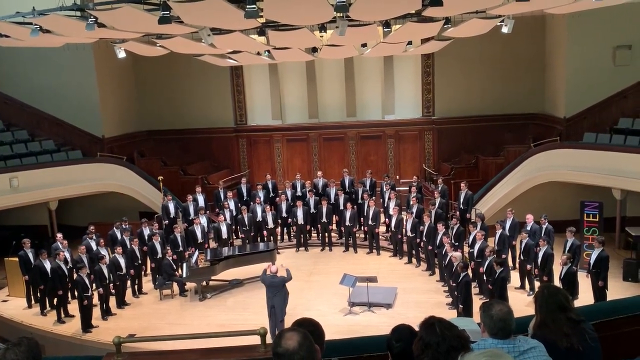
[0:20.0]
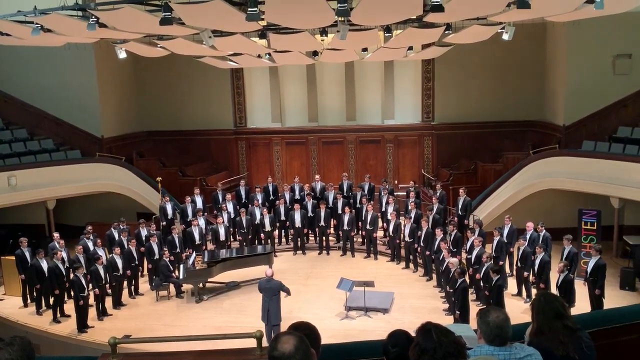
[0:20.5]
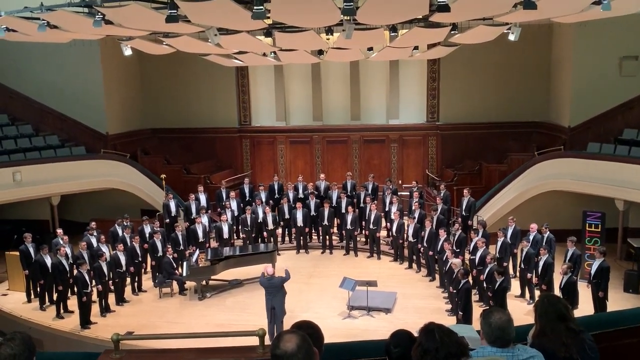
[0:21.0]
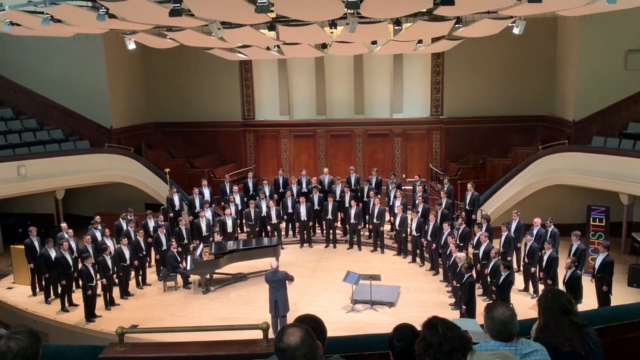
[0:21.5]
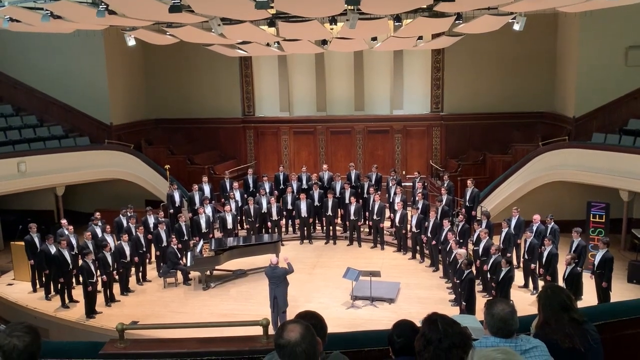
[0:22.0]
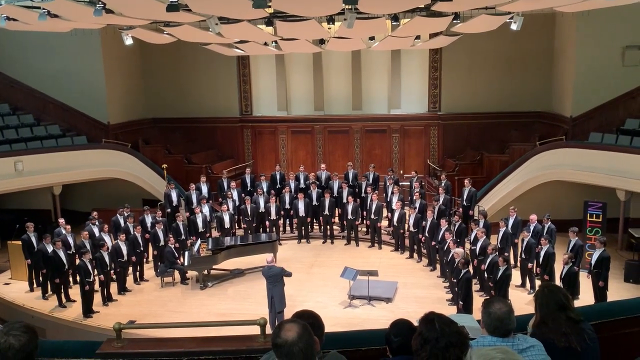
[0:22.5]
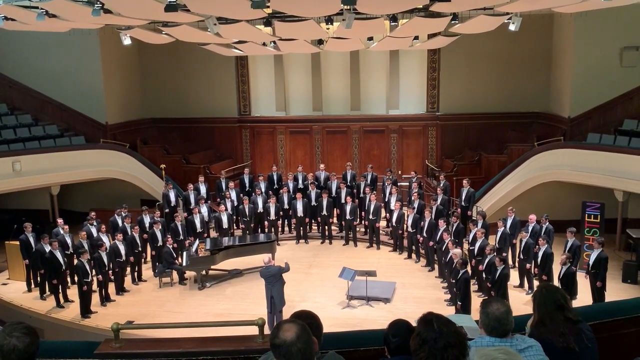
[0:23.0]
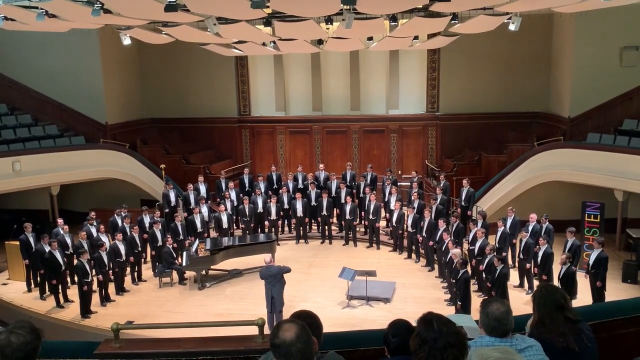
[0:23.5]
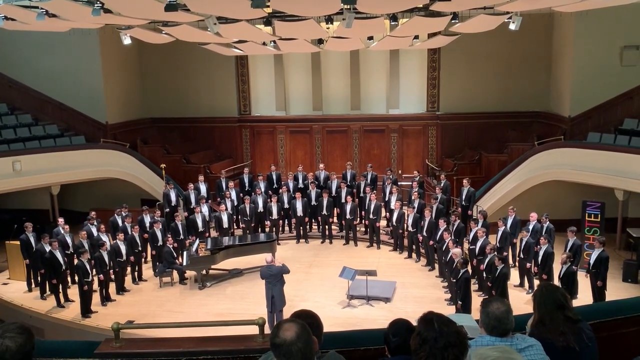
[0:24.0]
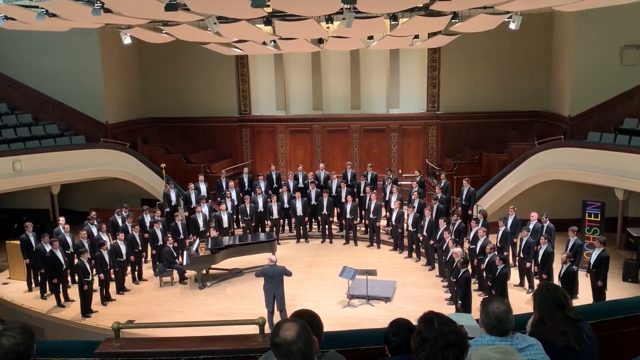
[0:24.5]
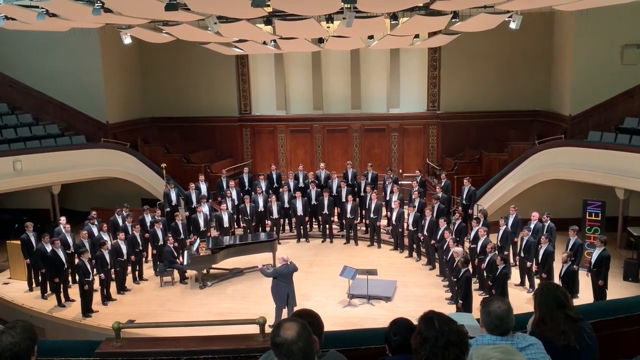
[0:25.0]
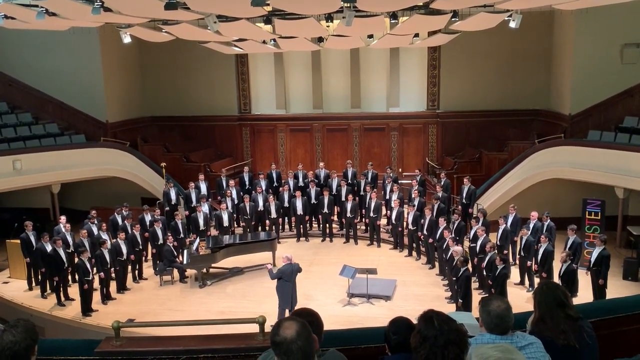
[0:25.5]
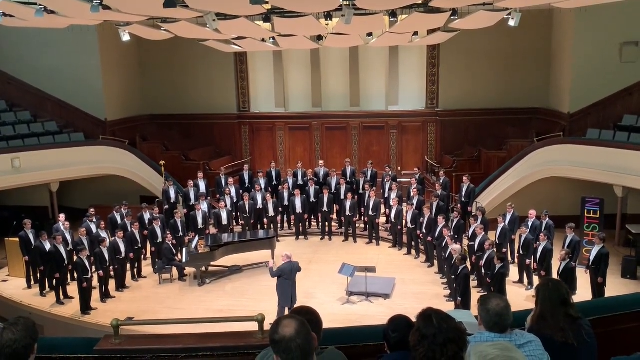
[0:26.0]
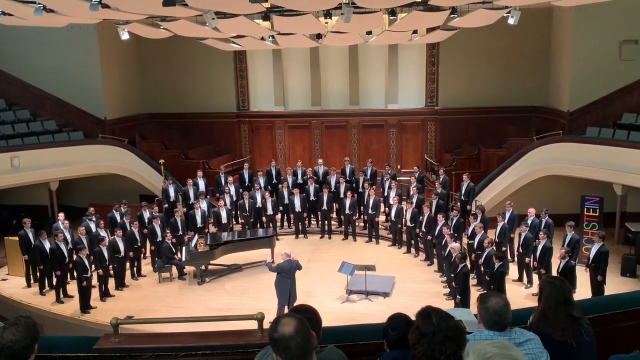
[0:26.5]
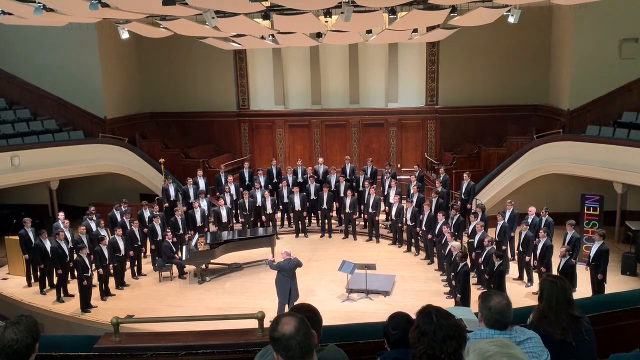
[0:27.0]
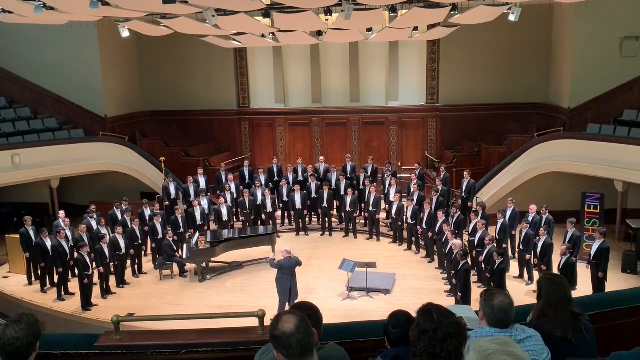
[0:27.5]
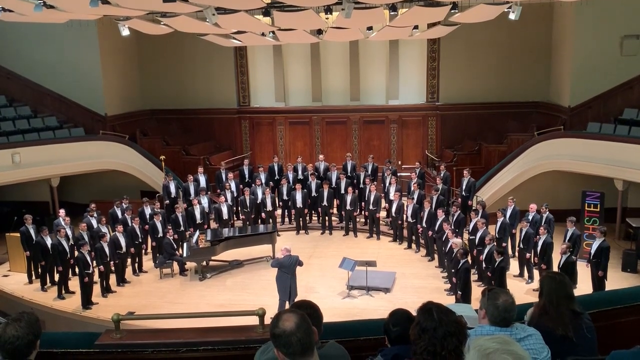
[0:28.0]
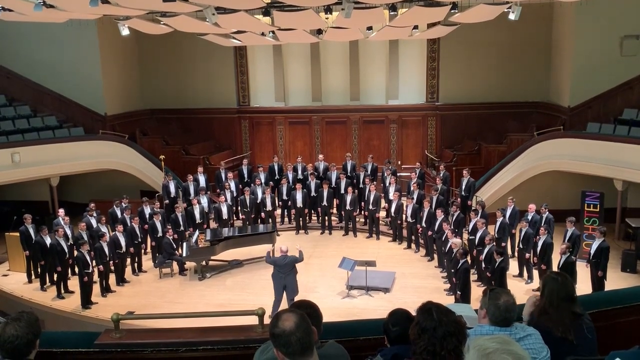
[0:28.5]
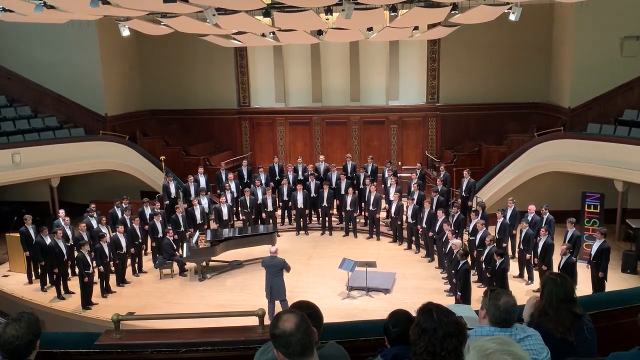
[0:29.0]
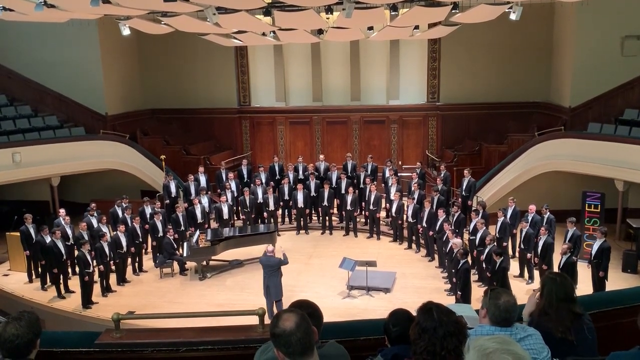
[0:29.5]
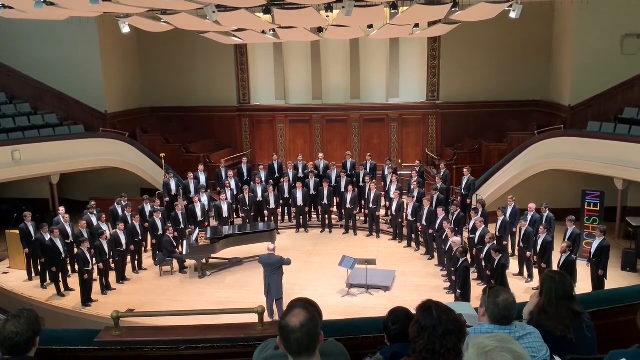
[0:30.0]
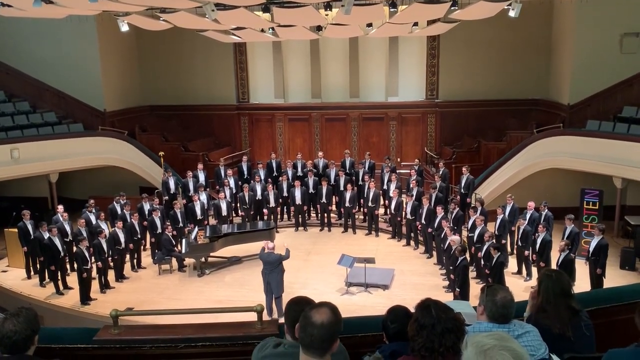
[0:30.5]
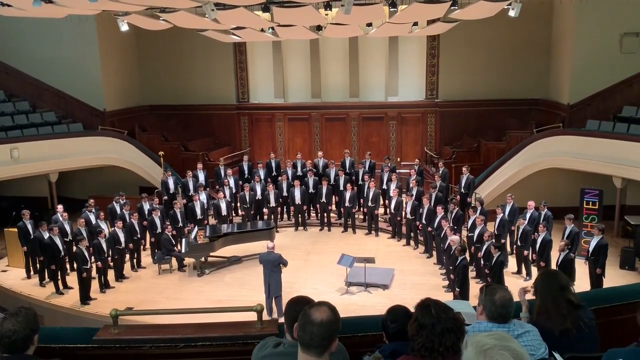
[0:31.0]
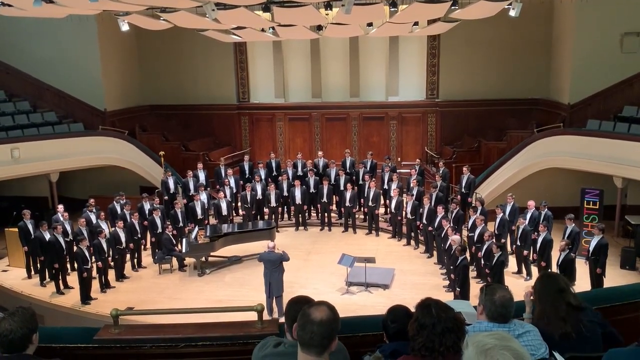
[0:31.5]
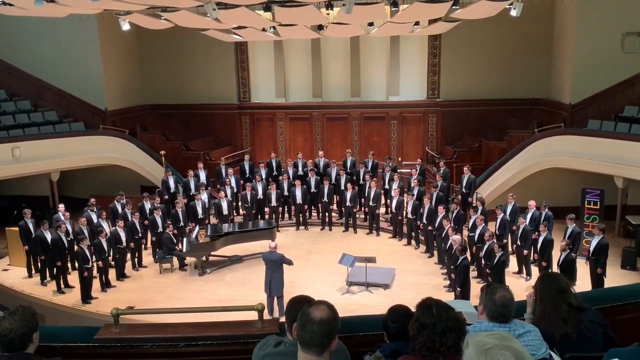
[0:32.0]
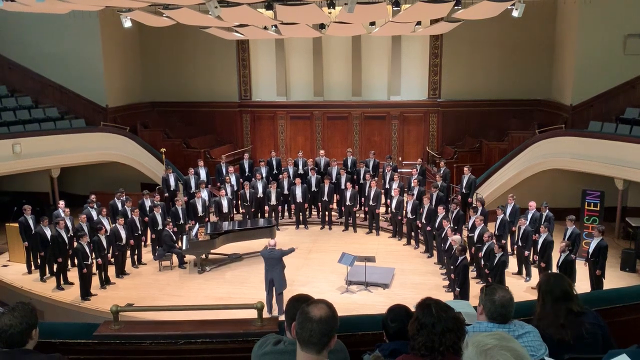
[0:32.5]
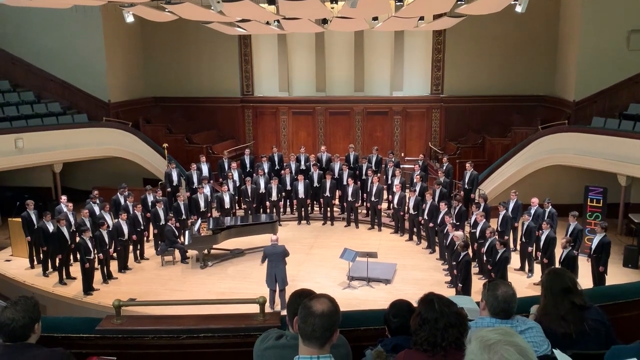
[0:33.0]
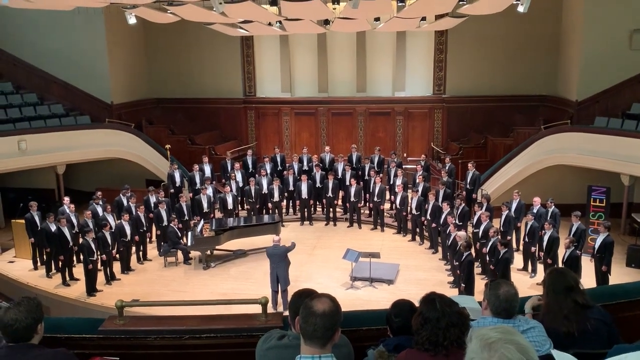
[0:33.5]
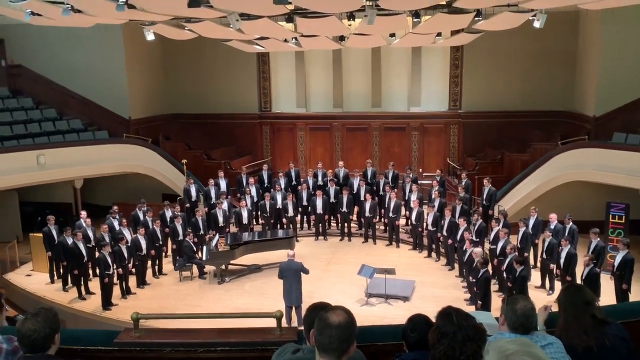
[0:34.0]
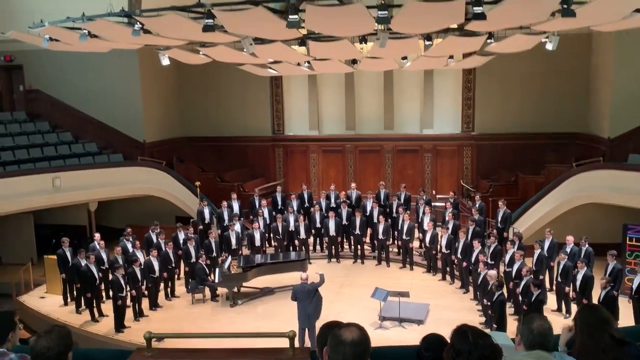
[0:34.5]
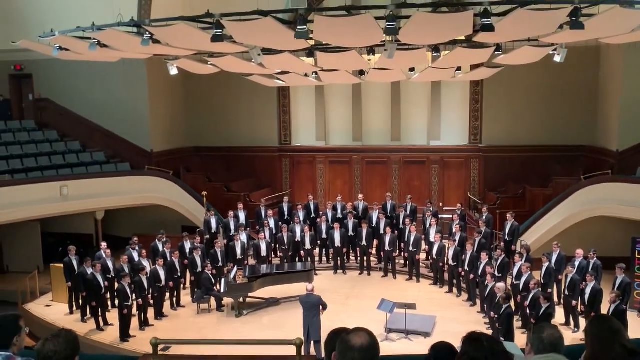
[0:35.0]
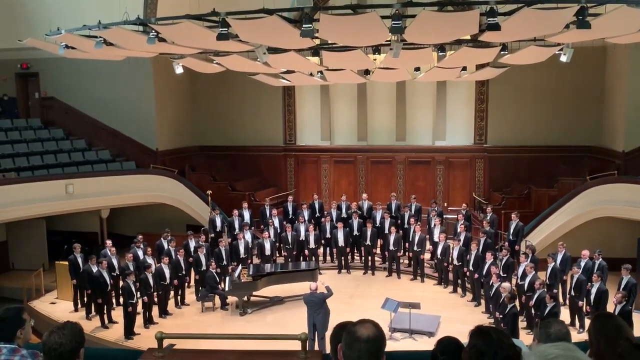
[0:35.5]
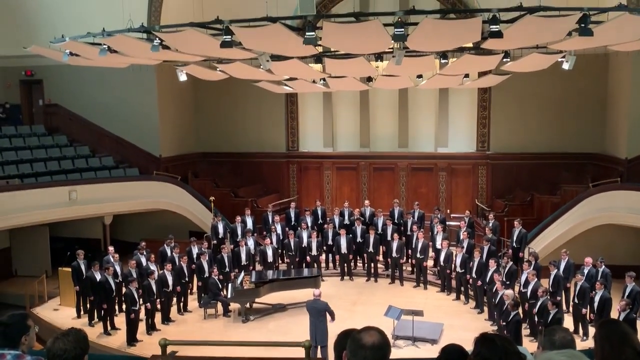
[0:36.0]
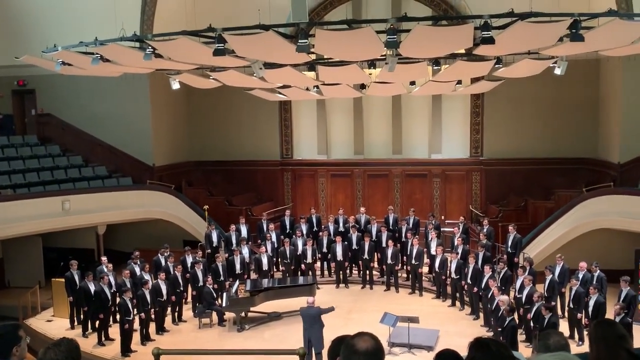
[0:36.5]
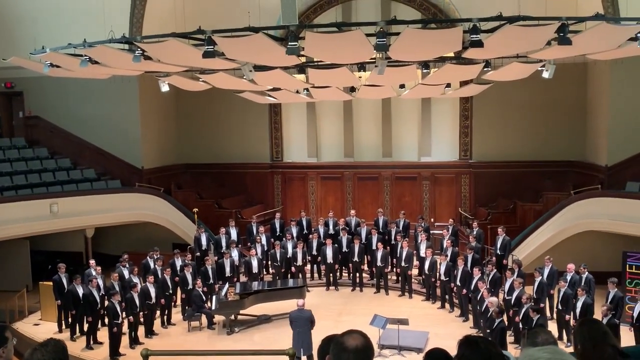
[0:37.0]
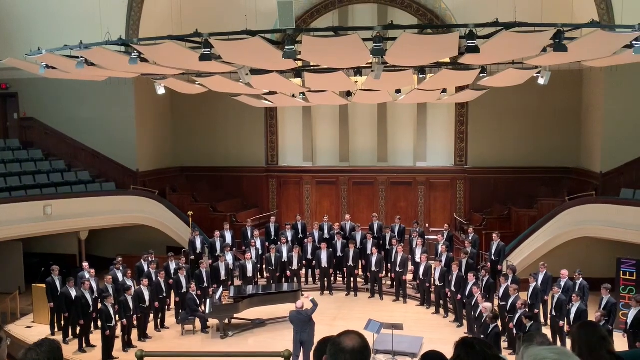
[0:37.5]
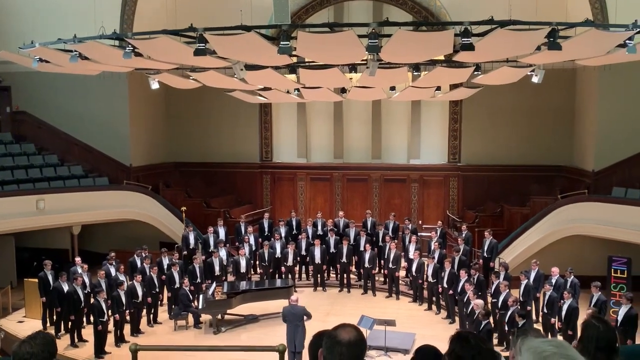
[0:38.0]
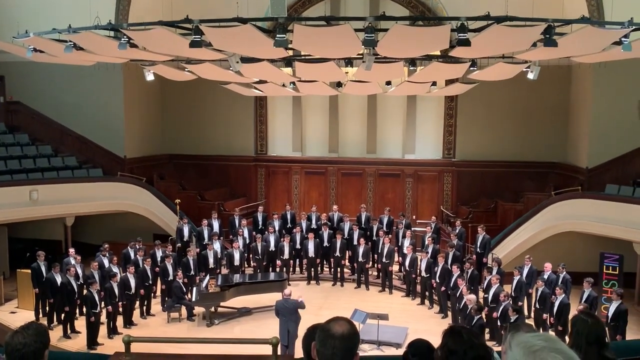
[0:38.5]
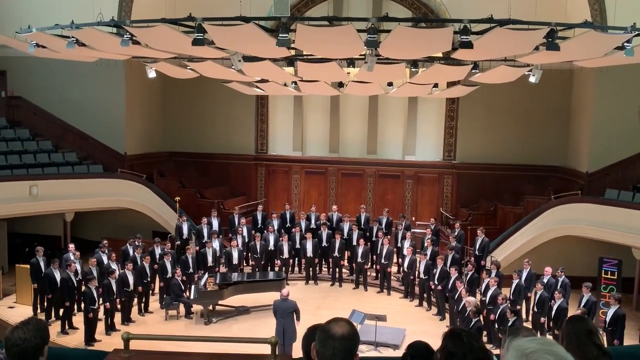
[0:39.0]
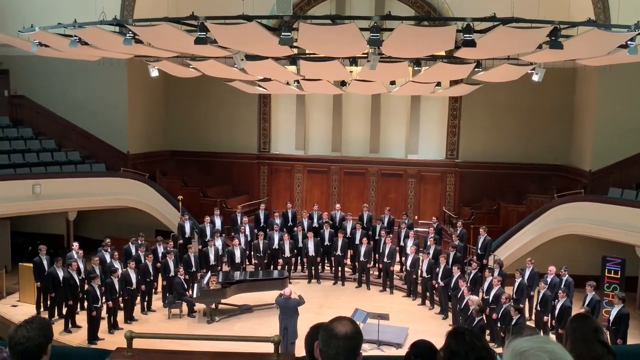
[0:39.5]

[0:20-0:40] The conductor stands in the center of the stage conducting the vocalists. The stage is light in color, apparently a light-colored wooden stage. Overhead lights are visible, along with tiers of seats to the left and right of the vocalists, higher up rather than at floor level. Those seats are empty, while audience members at the bottom of the screen look at the vocalists with the backs of their heads facing the camera. The conductor moves his hands in typical conductor fashion. At one point he turns and looks at the vocalists on the left-hand side of the stage and conducts them exclusively before turning back to the center to conduct the whole group. His hands make different movements, sometimes more rapid, sometimes not, and sometimes he appears to swirl them in a loopy fashion.